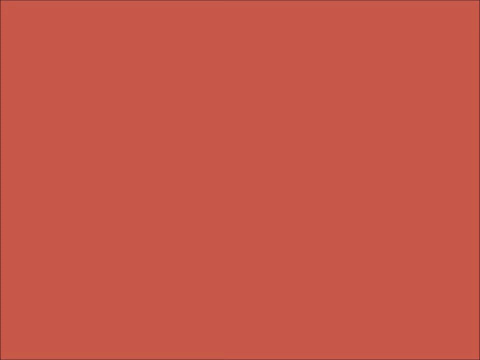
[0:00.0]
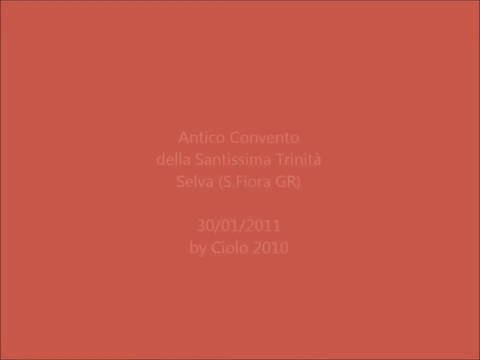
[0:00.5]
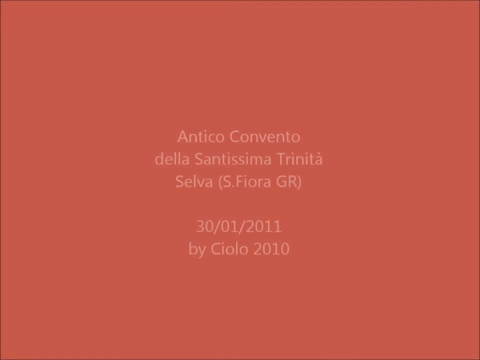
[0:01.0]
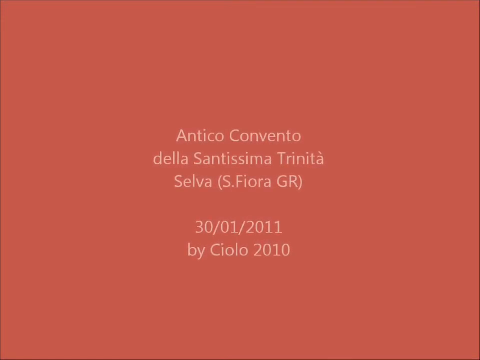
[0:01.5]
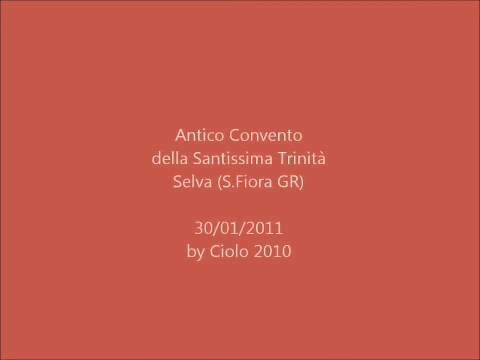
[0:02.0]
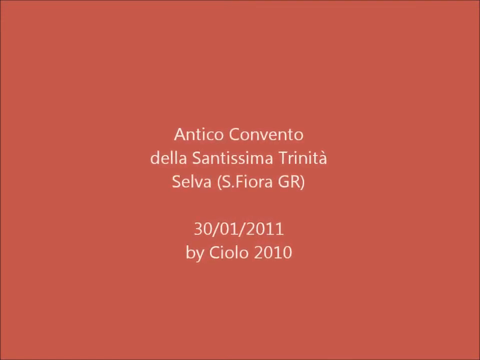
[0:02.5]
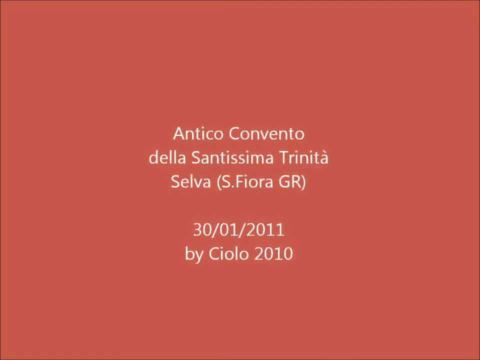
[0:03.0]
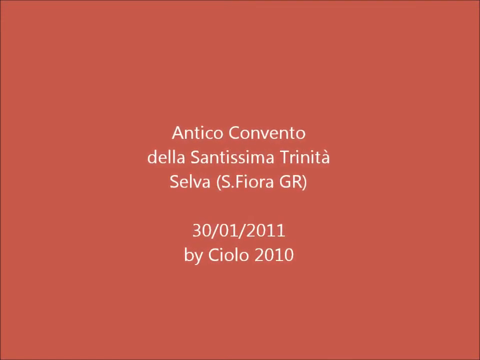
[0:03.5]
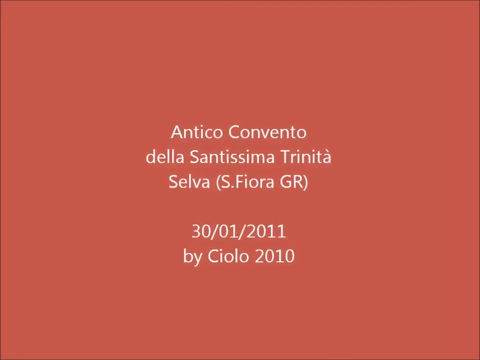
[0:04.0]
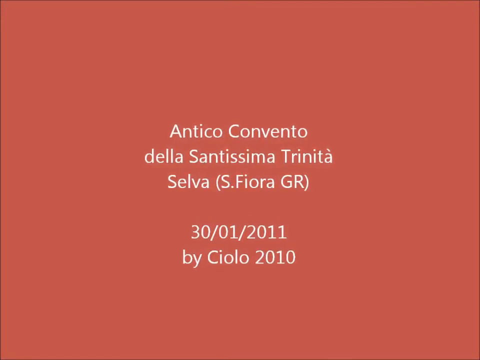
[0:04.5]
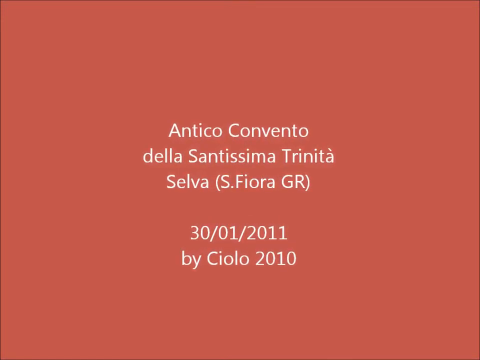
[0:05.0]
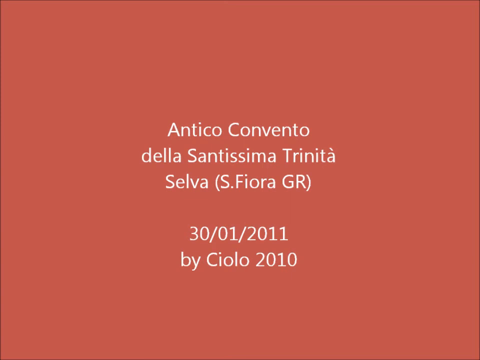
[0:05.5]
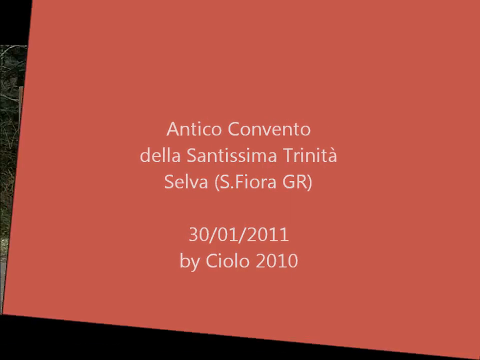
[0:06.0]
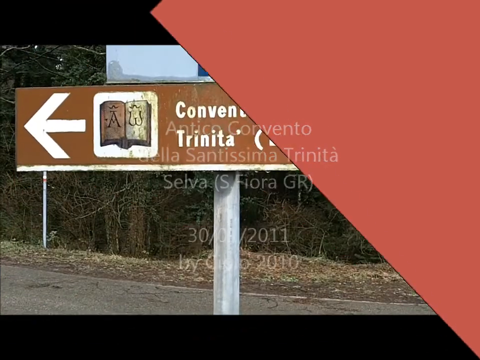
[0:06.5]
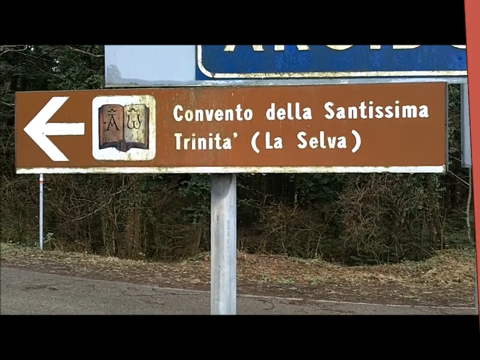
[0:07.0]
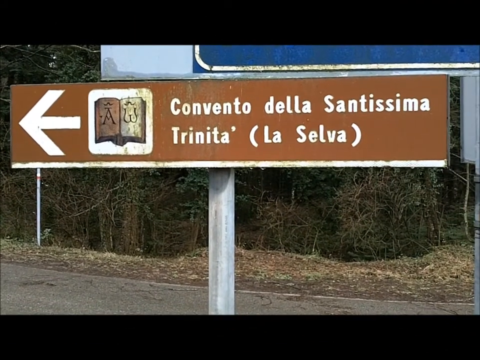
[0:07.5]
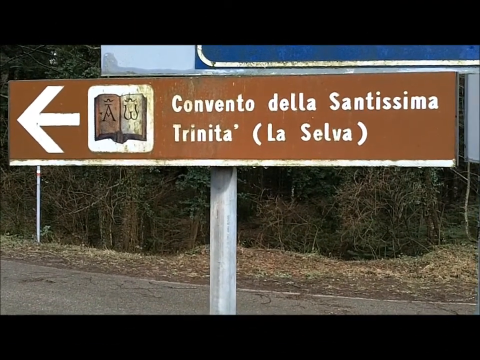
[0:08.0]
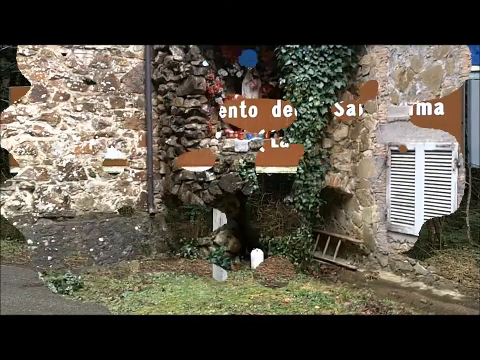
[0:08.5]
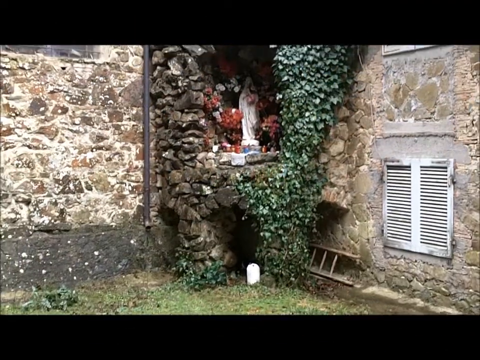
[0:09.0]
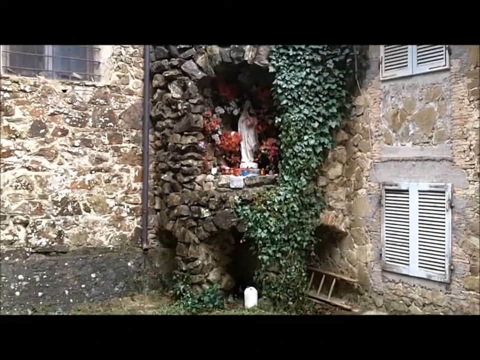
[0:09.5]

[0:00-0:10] A card reads "Antico Convento", in Italian, along with a timestamp of January 30th 2011 by Sciolo 2010. The scene changes to a road sign, also in Italian, which apparently says a convent called La Selva, with an arrow pointing to where it is. Next comes an outdoor altar or grotto of the Virgin Mary surrounded with flowers. There appear to be two vents on the right side and a jealousy window on the left side. The grotto is made of stacked cobblestones, and there is a climbing plant on the right side.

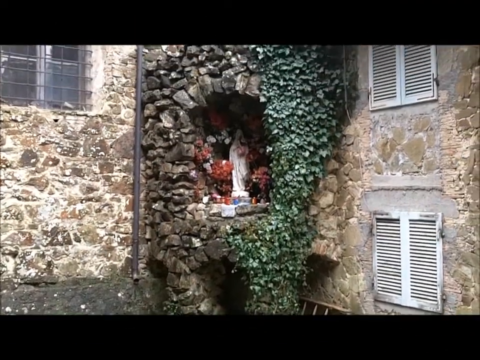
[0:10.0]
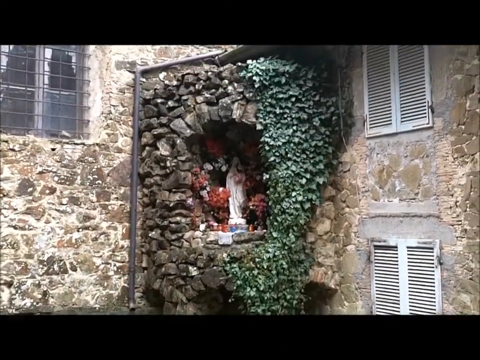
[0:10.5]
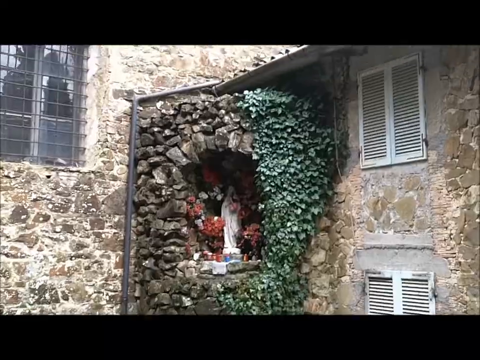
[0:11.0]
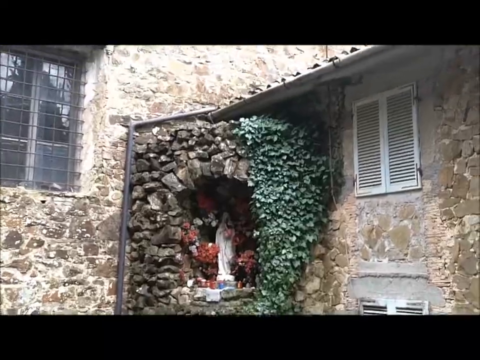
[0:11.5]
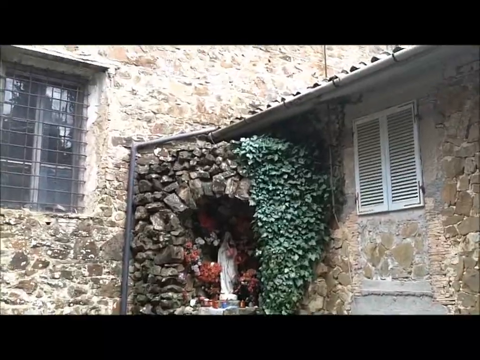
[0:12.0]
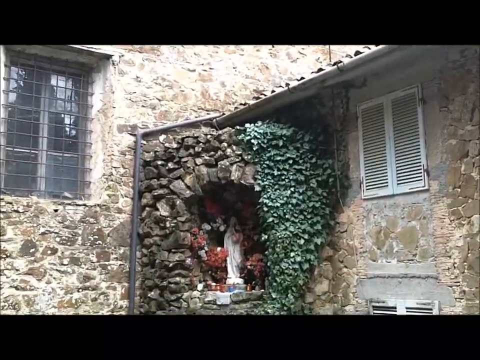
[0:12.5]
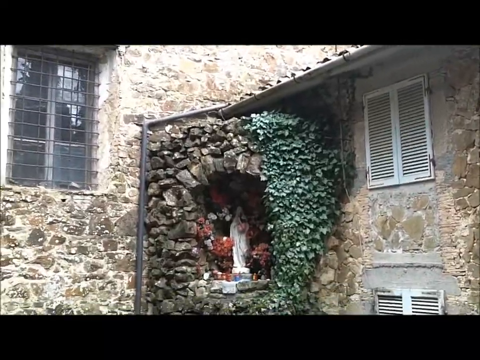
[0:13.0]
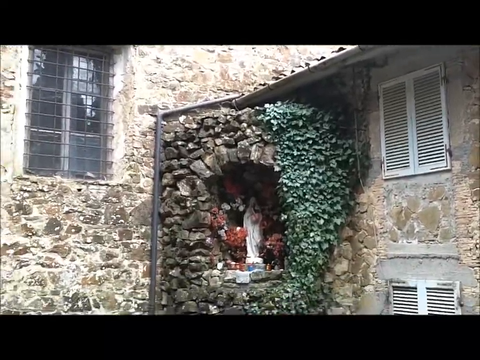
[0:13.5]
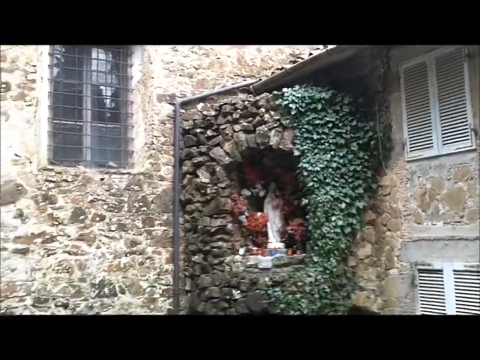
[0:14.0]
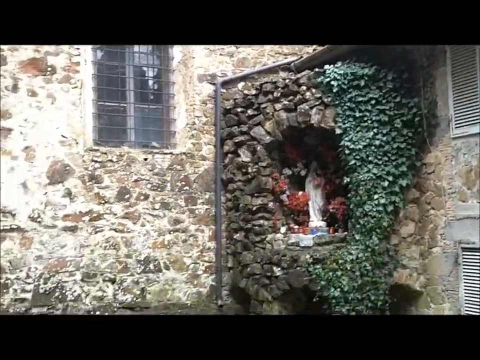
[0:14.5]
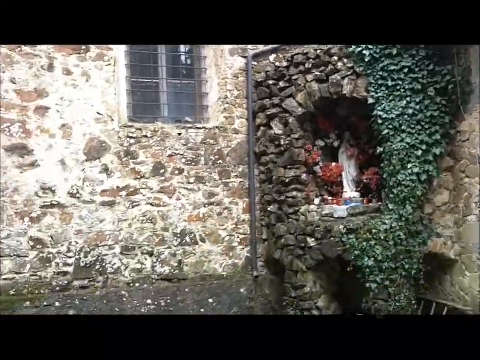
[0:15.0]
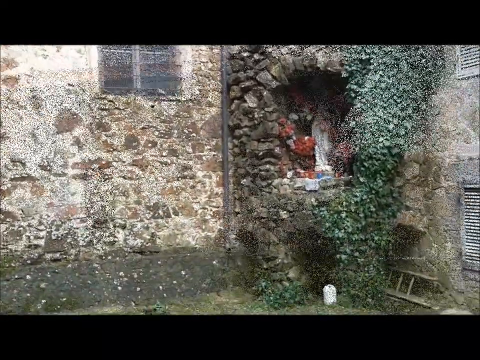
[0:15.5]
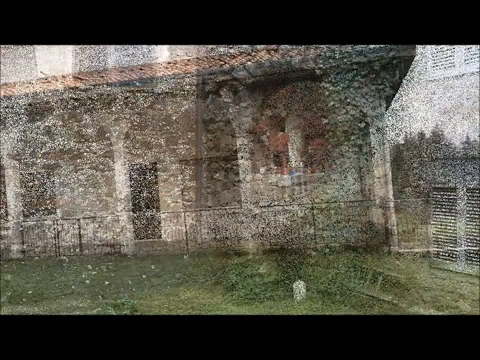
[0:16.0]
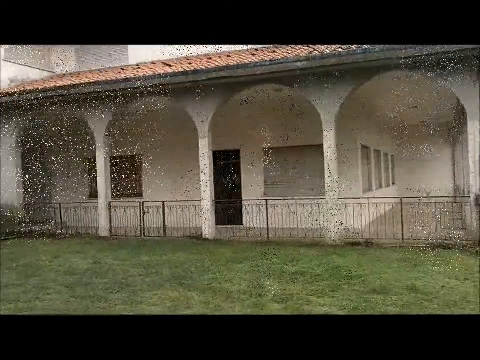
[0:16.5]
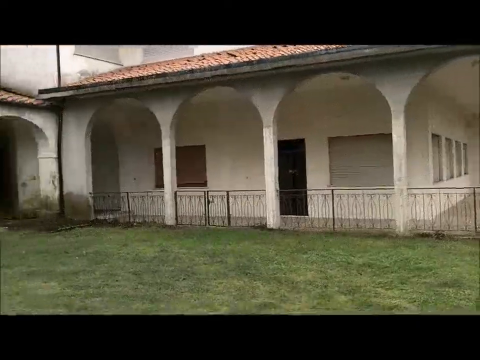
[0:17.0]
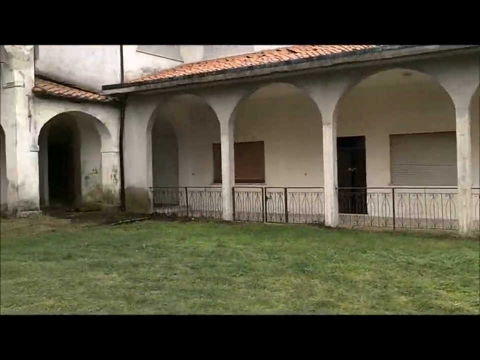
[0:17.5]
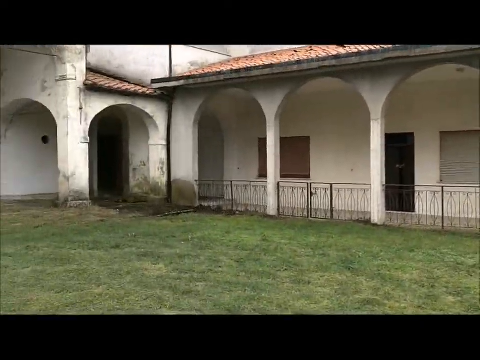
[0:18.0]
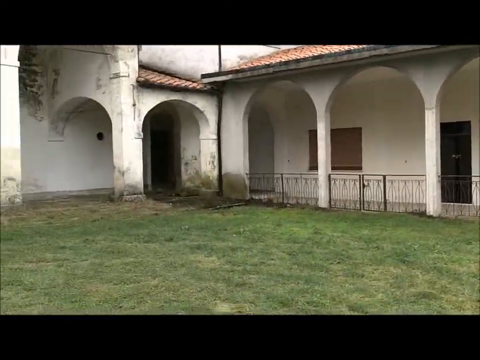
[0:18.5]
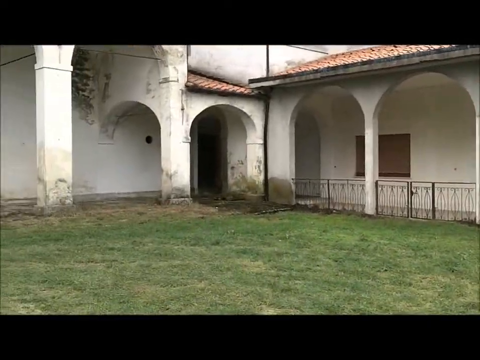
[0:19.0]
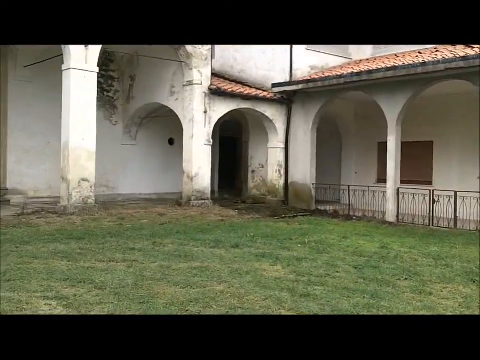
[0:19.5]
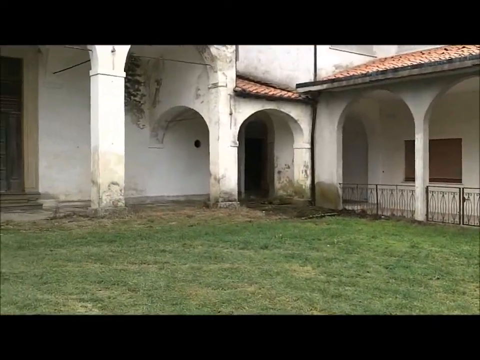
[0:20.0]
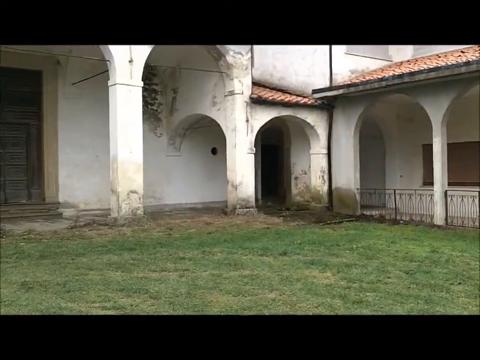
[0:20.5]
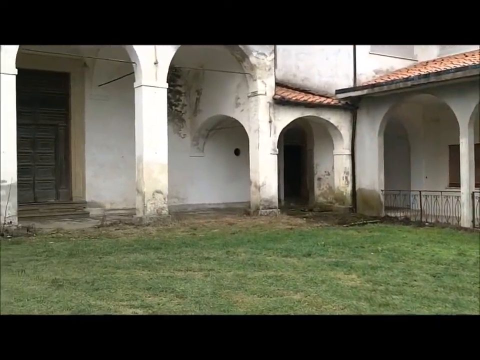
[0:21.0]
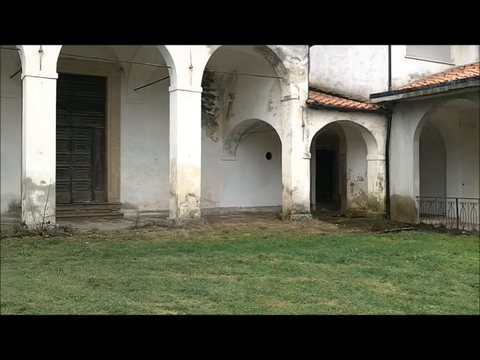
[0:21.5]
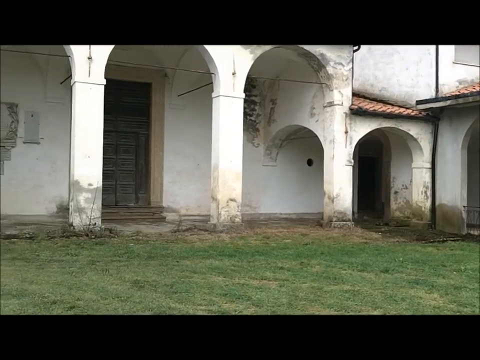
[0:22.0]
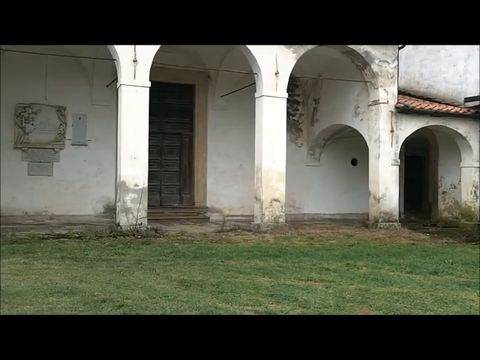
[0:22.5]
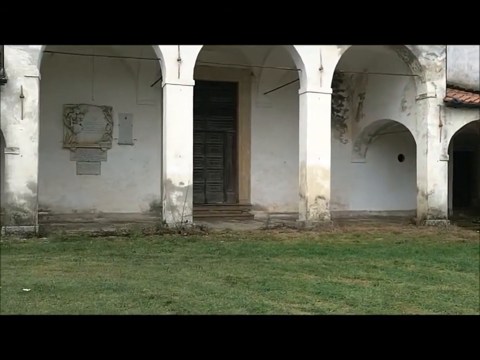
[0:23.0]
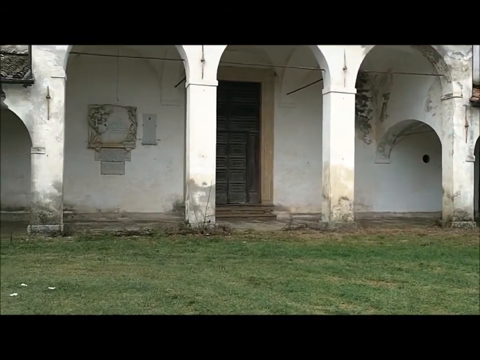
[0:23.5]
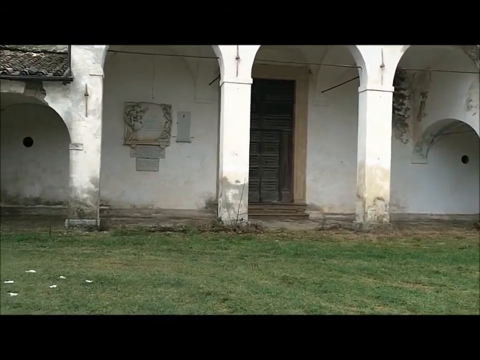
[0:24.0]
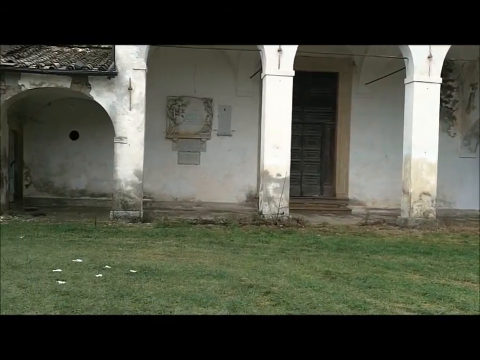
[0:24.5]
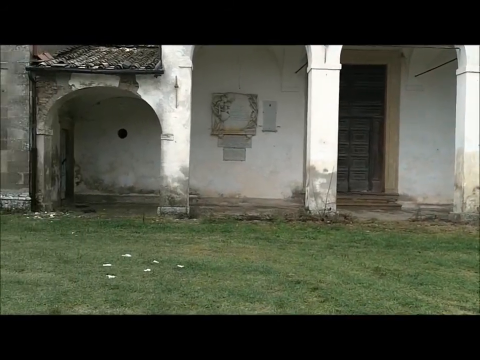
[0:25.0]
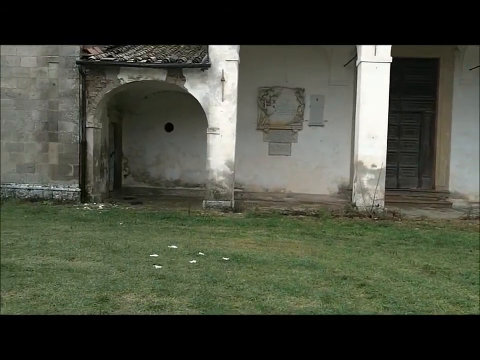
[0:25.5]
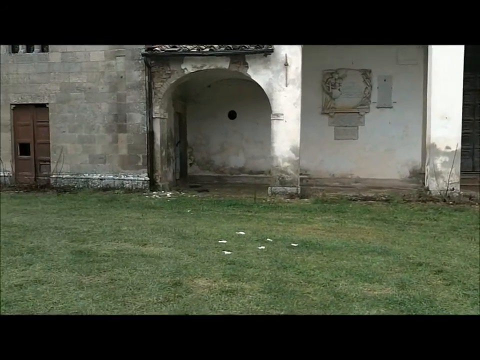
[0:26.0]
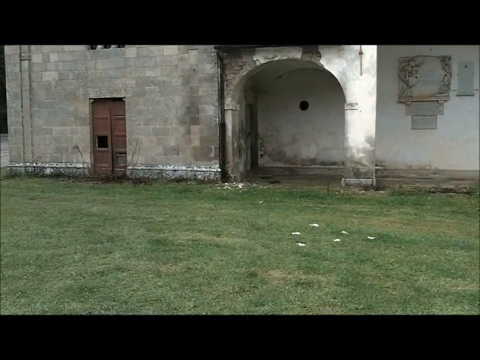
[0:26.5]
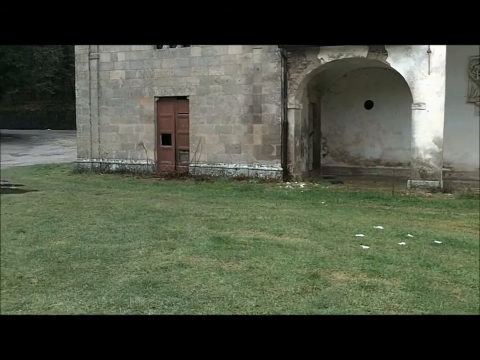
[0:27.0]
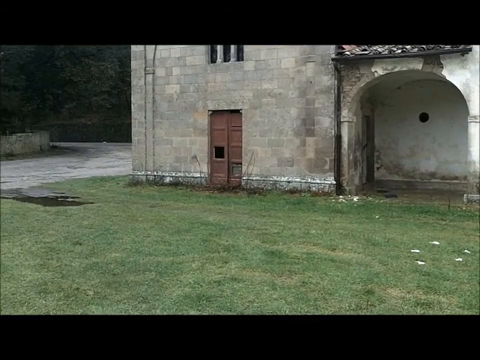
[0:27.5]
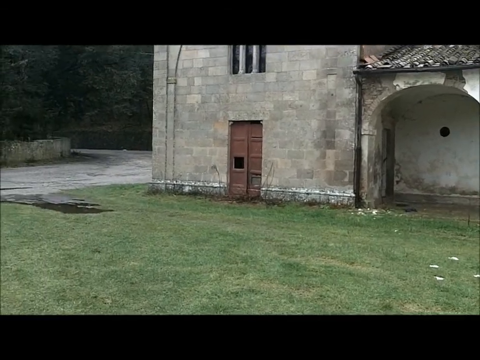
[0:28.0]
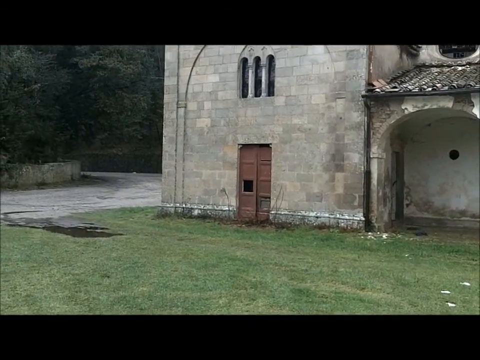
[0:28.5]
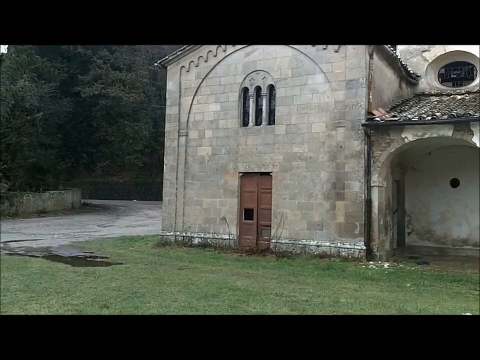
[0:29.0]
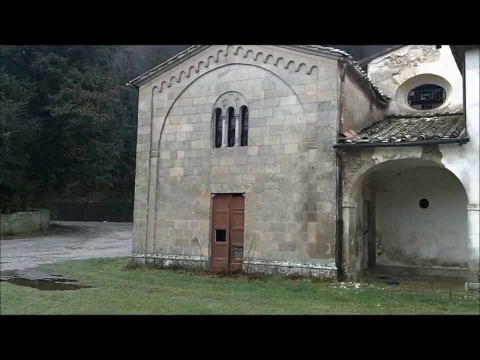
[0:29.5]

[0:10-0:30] The outdoor grotto of the Virgin Mary is shown, and then the view moves to a long abbey with arched pillars. The building does not look well kept, with staining on the walls, but the grounds are well kept and the grass is trimmed short. At the end of the abbey is a steel double door with a small window on one of the doors, and above it are three quite narrow arched windows. This is apparently the grounds of the monastery. The roof has Spanish clay tiles, and the arched pillars are very long and wide. The video is taken in daytime under cloudy skies.